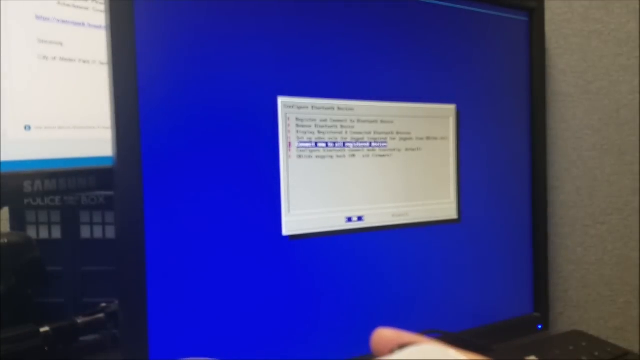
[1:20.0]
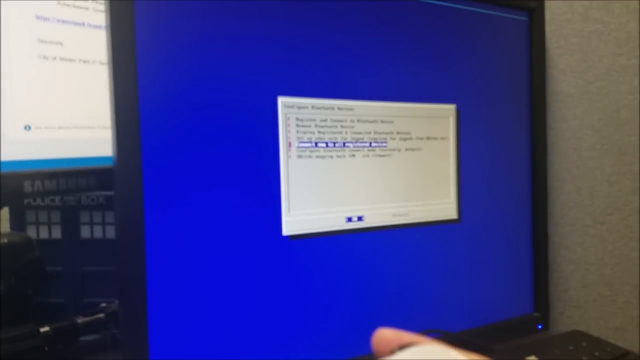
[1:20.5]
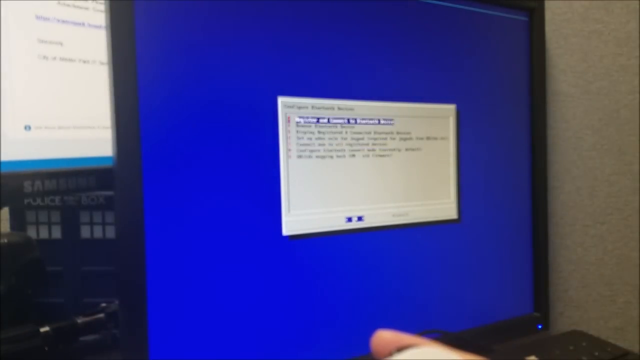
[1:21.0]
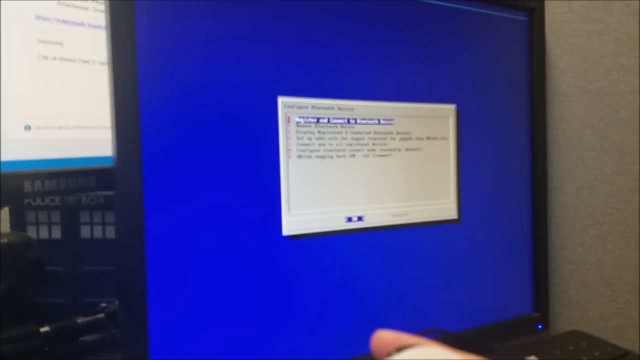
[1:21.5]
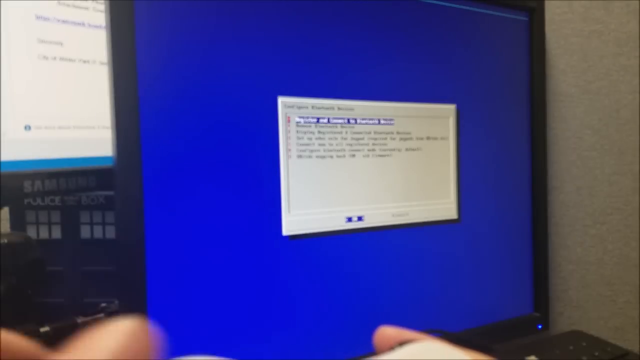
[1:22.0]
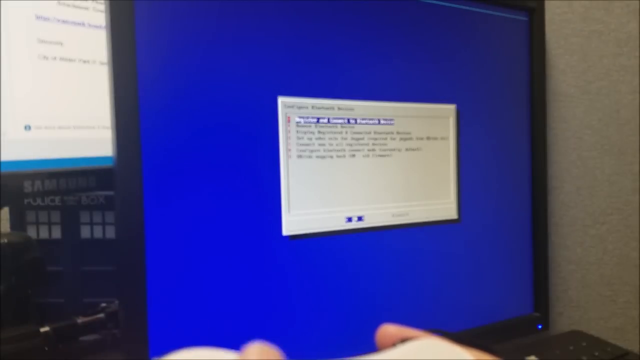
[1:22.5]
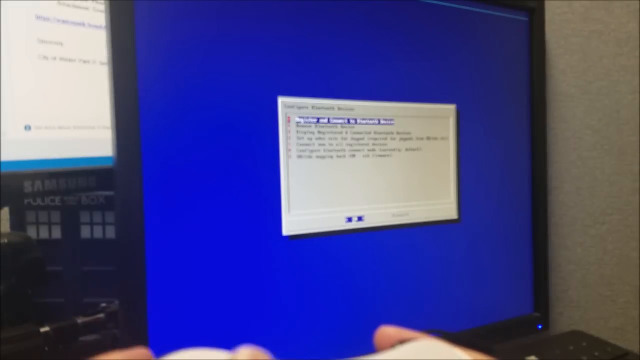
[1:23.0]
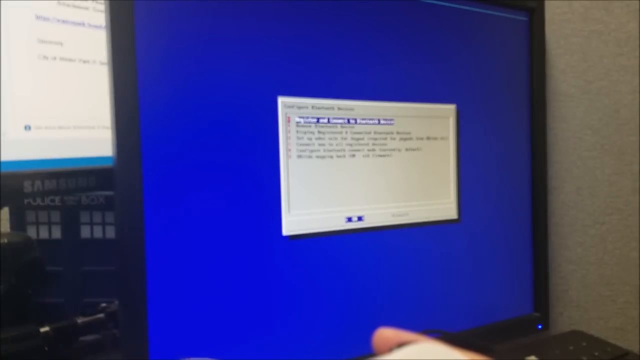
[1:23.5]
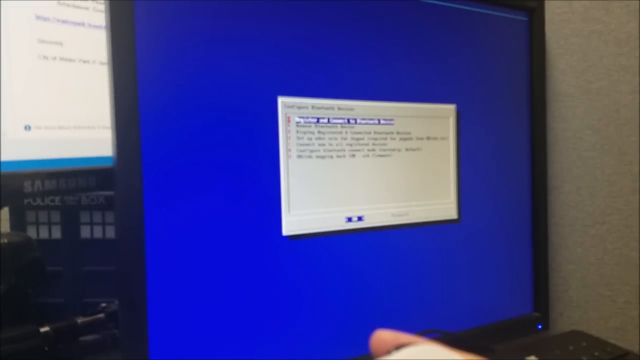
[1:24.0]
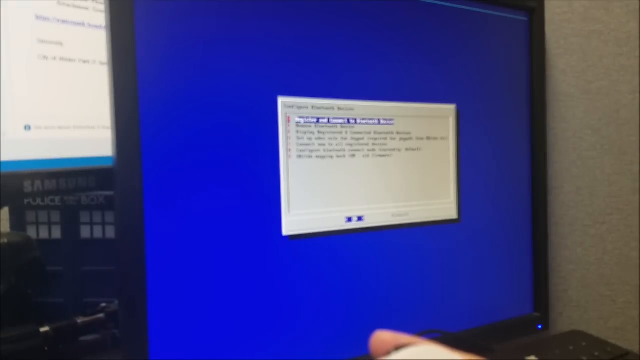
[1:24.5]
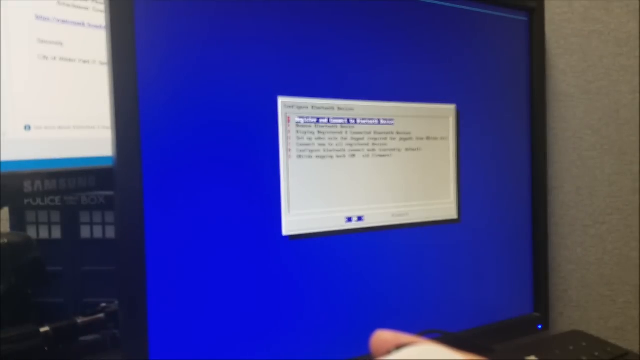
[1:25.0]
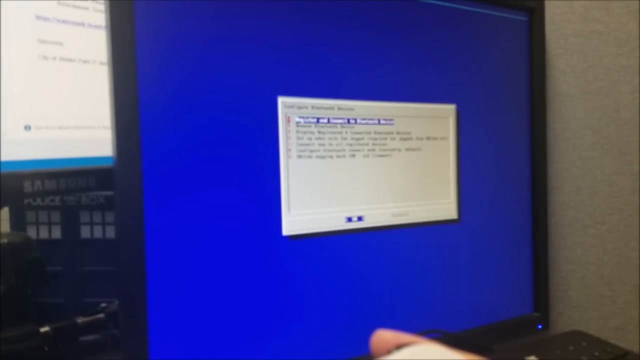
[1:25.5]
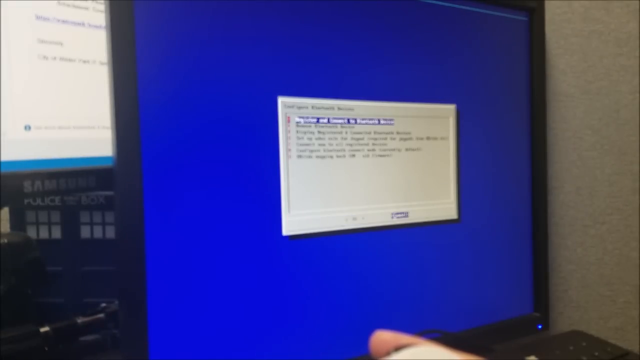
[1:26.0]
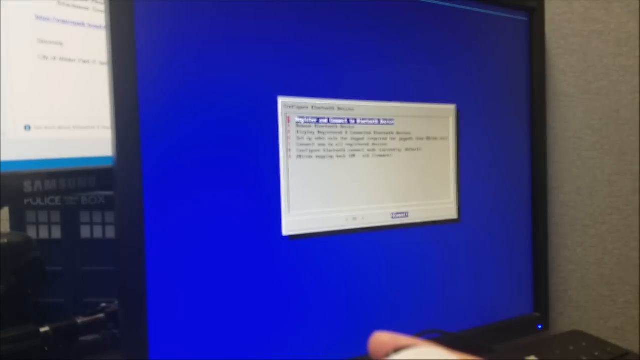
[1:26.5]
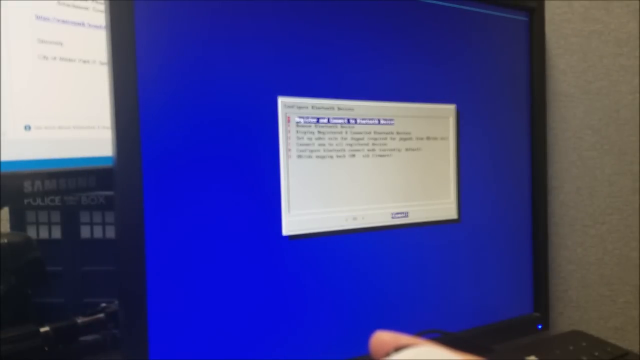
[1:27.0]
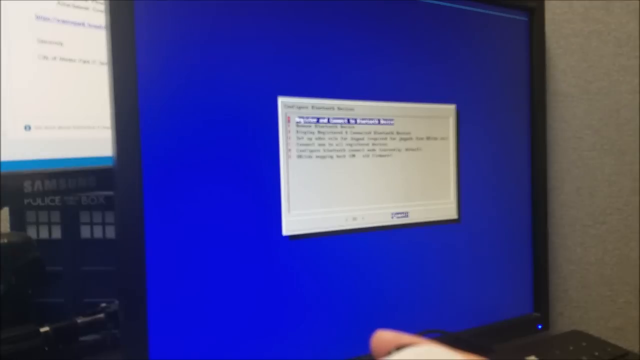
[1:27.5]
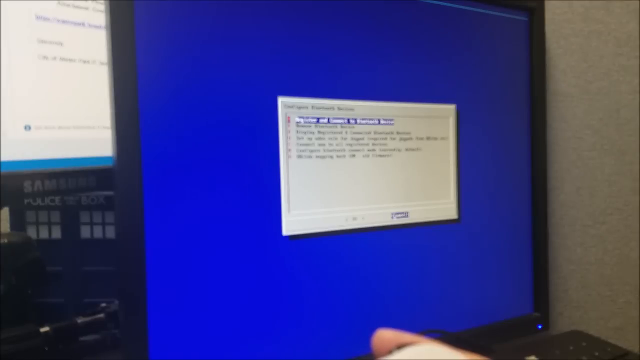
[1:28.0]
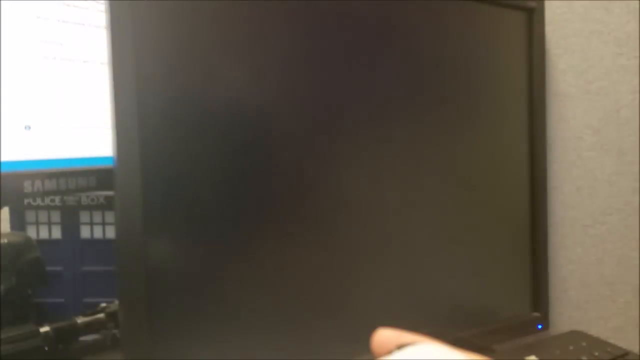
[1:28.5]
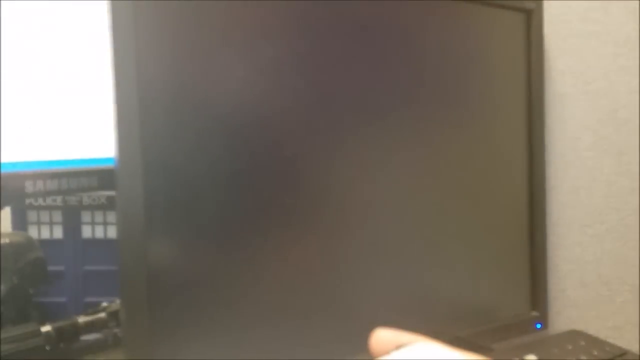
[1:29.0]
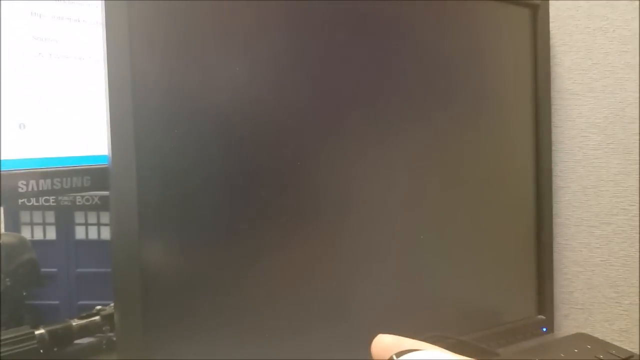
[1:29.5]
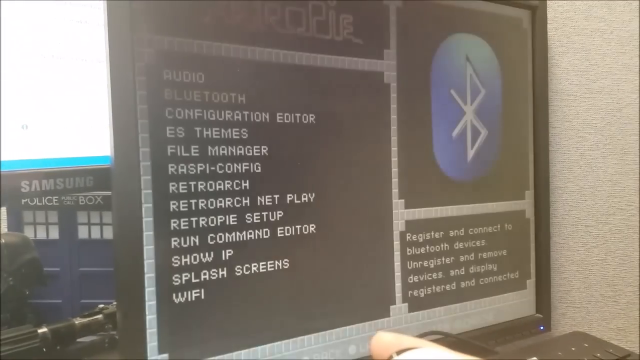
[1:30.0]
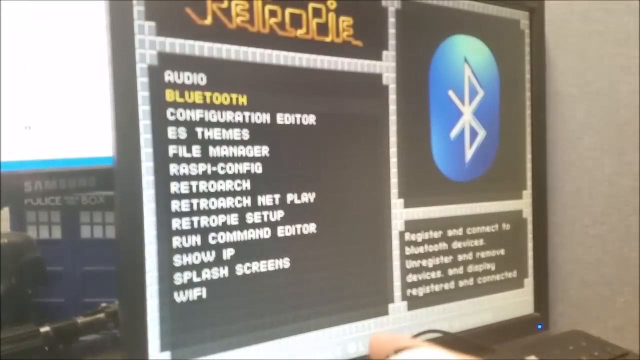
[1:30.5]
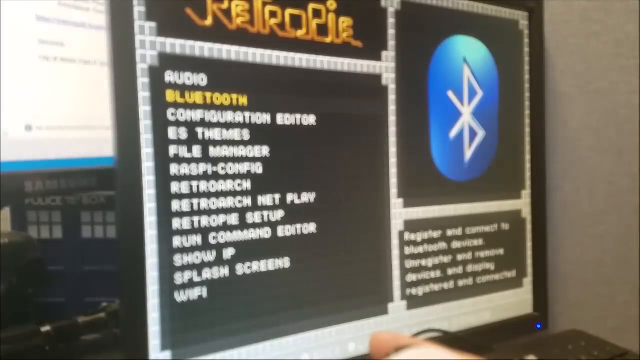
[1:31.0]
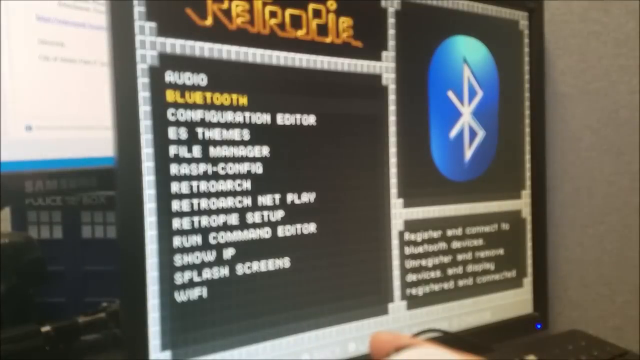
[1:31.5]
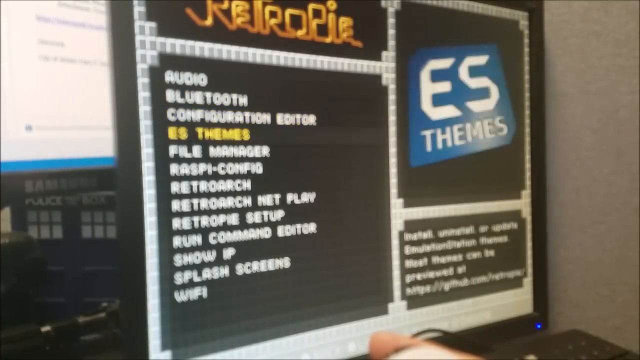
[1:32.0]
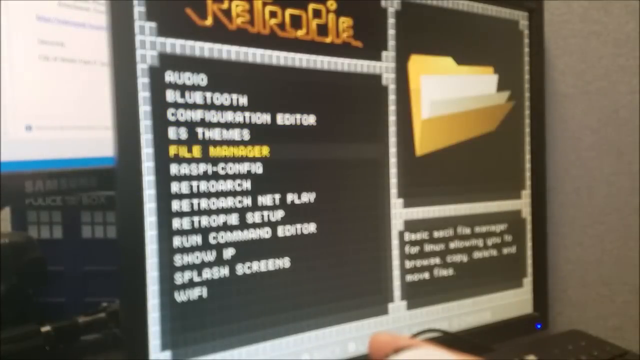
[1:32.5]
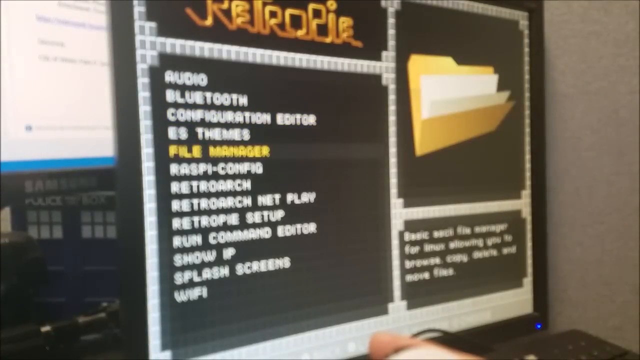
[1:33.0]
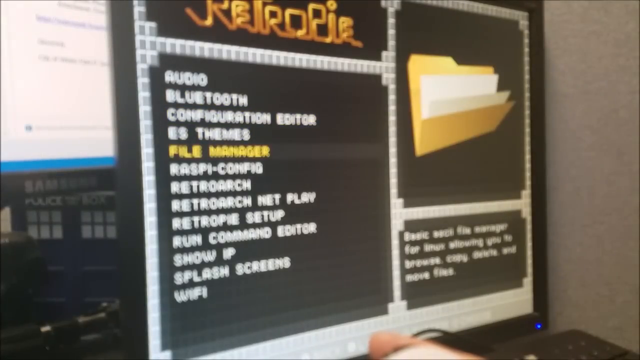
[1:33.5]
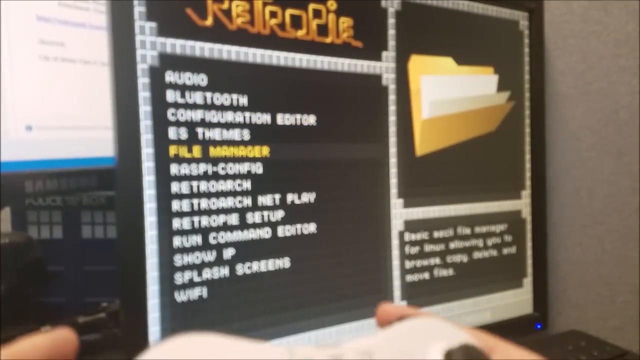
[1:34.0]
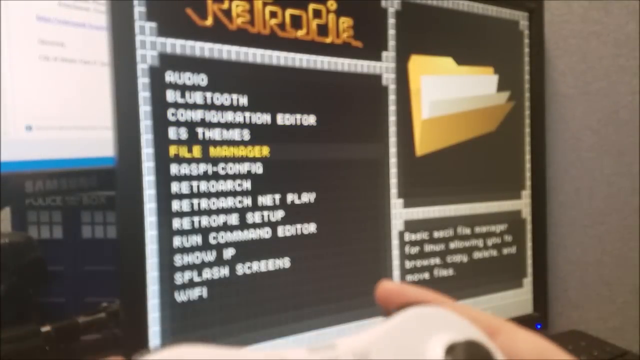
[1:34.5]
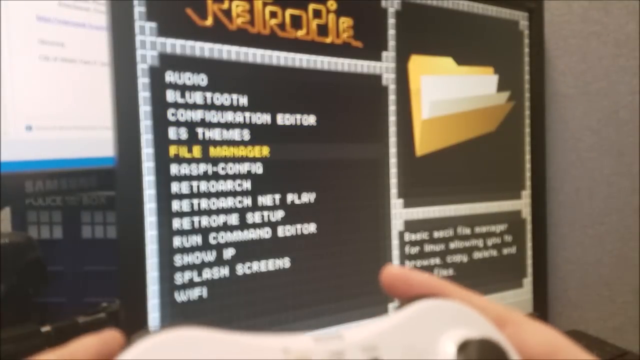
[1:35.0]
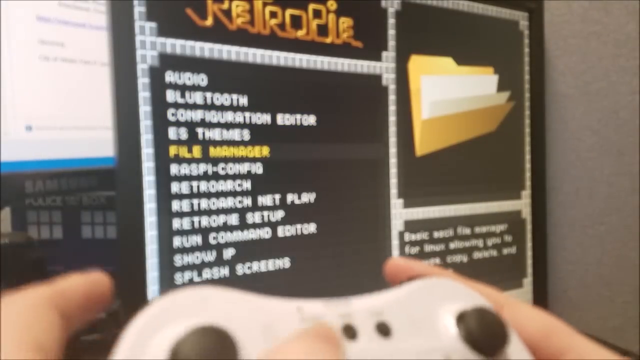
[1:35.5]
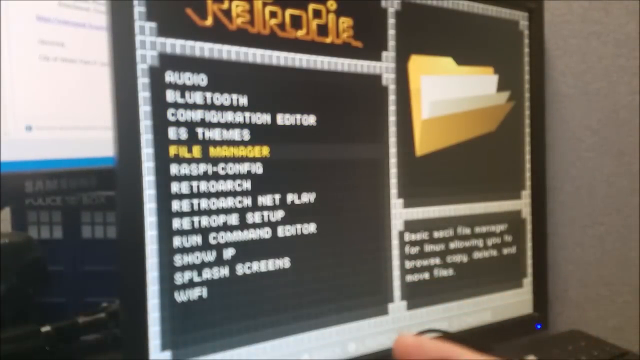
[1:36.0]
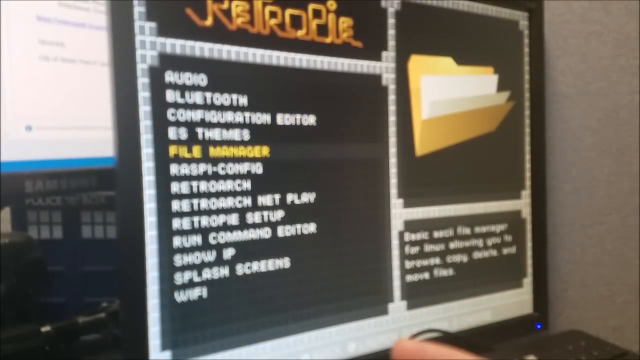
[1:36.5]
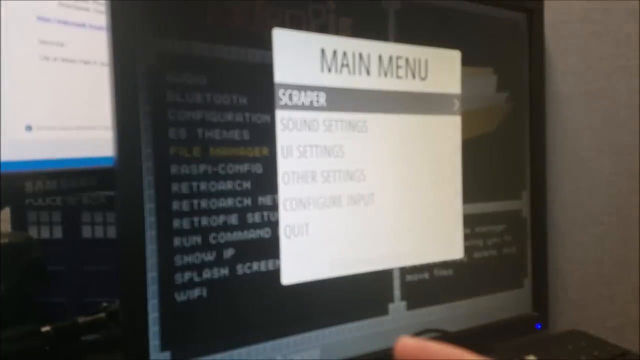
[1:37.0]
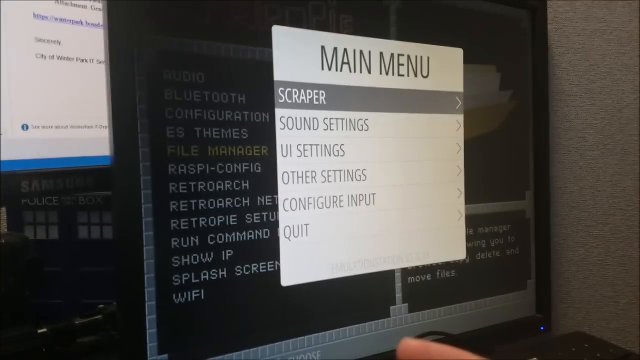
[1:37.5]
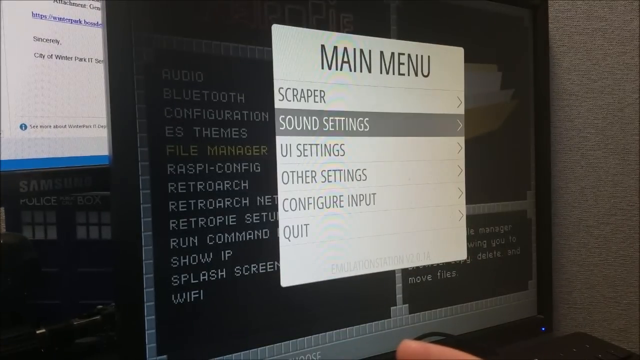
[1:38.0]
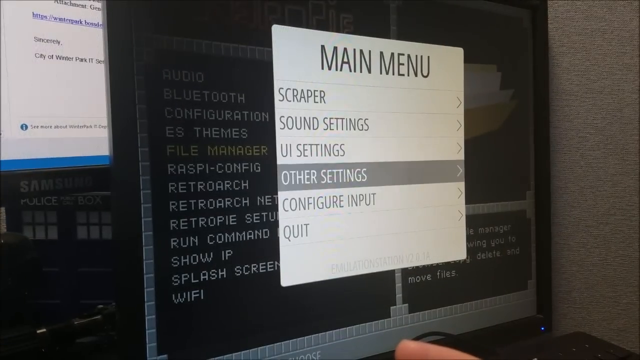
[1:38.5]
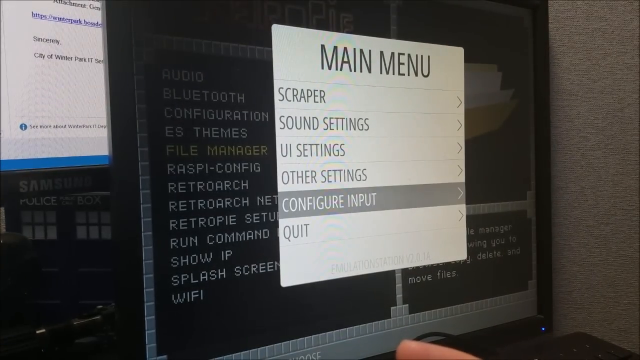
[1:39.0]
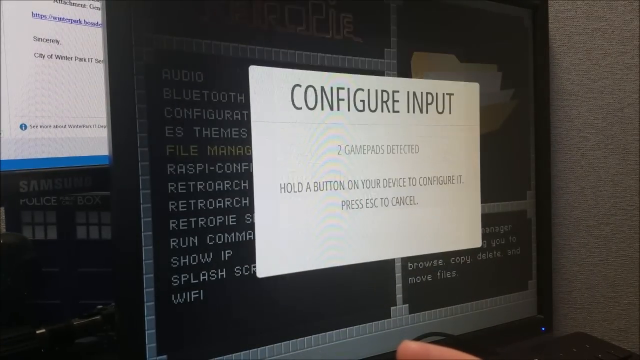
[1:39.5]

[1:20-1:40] The scene appears to be the corner of a cubicle, with the grayish textured cubicle wall on the right. There is apparently a desk, since one corner of a computer keyboard and a computer monitor are visible. Behind the monitor is another computer monitor, a Samsung, with a white page open showing mostly black text along with purple text and a blue border. In the background are two doors that appear to be wooden, with six window panes each and the words "police box" over the top. On the desk is a completely black Darth Vader head, and in front of it there appears to be a tripod. On the computer screen is a pop-up box with some of its text highlighted; the highlight moves all the way to the top text. A cursor clicks on the left box, then the right box, and the screen lights up to a page with "RetroPie" at the top. To the right is a clipboard image, and to the left are selections, with "configuration editor" highlighted. The person's hands hold the video game controller.